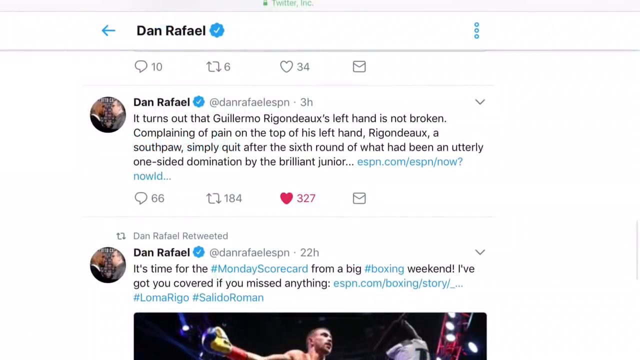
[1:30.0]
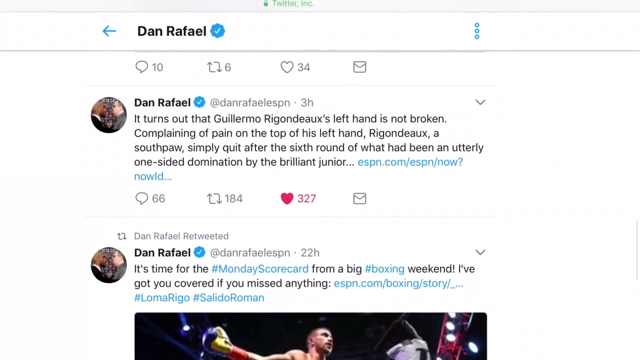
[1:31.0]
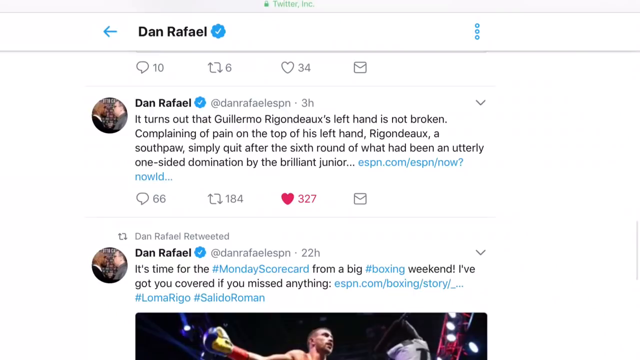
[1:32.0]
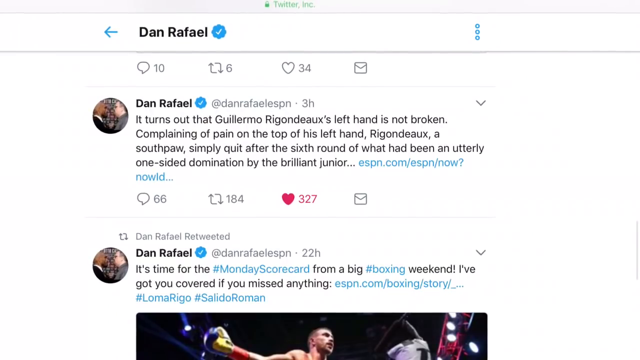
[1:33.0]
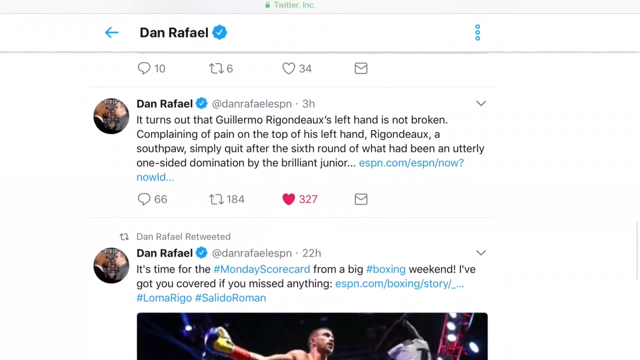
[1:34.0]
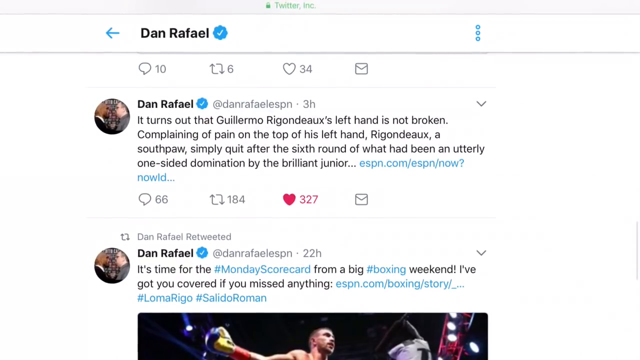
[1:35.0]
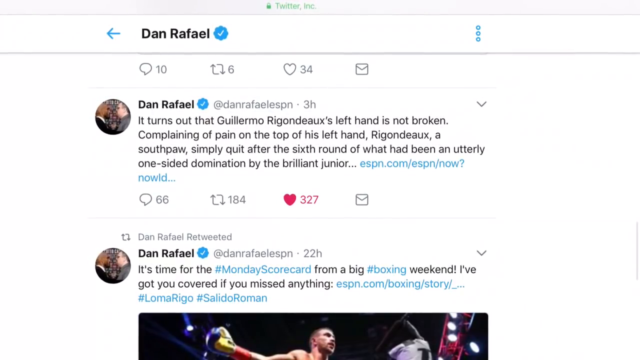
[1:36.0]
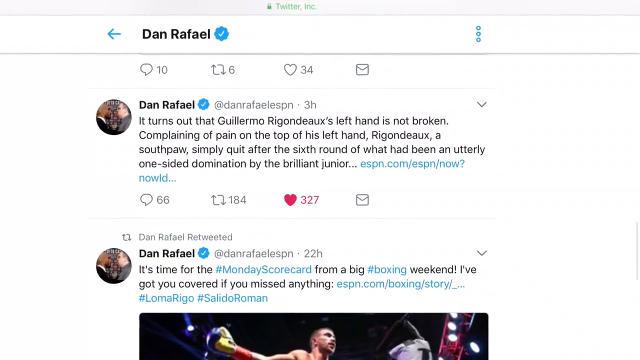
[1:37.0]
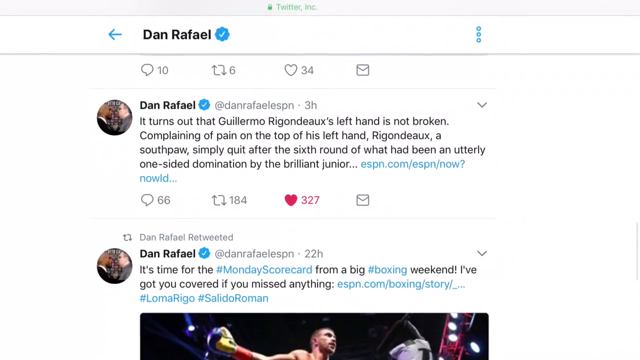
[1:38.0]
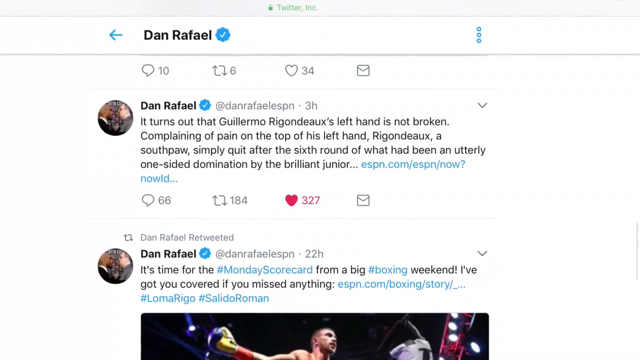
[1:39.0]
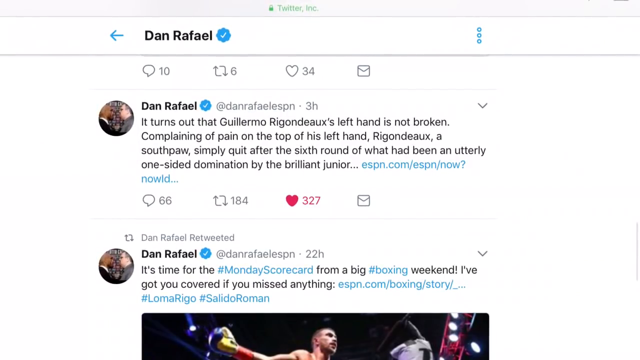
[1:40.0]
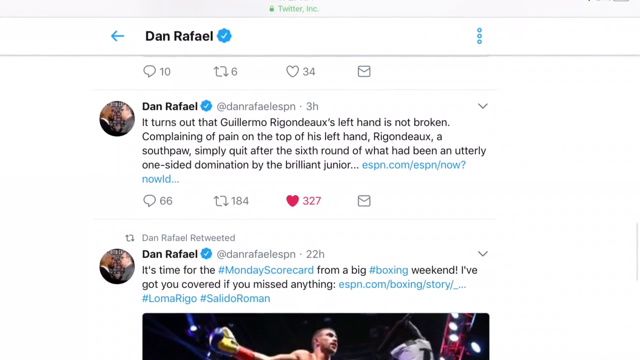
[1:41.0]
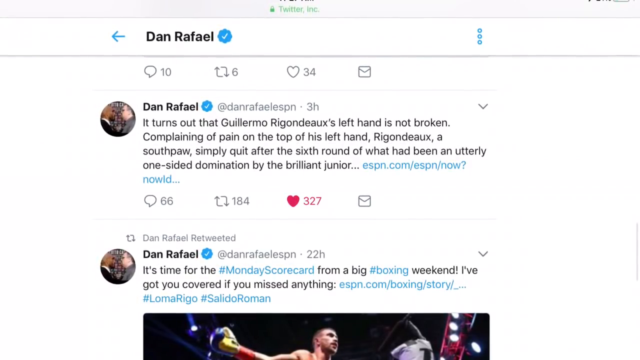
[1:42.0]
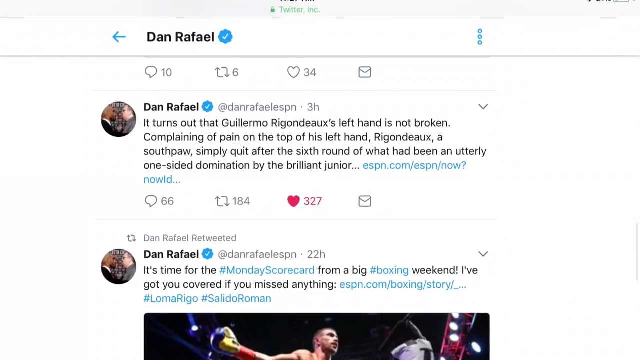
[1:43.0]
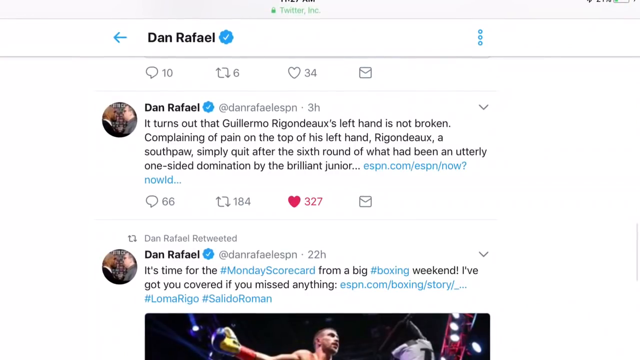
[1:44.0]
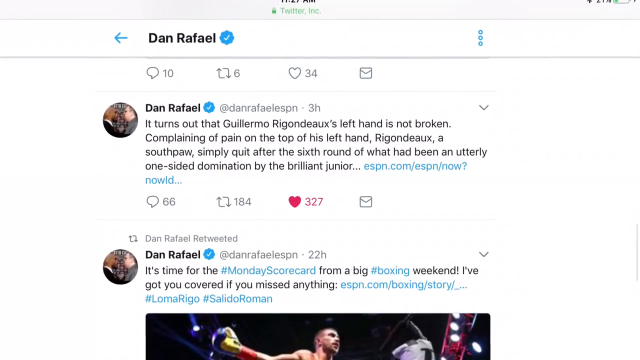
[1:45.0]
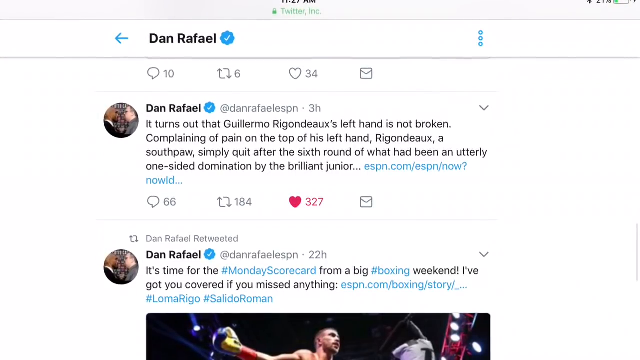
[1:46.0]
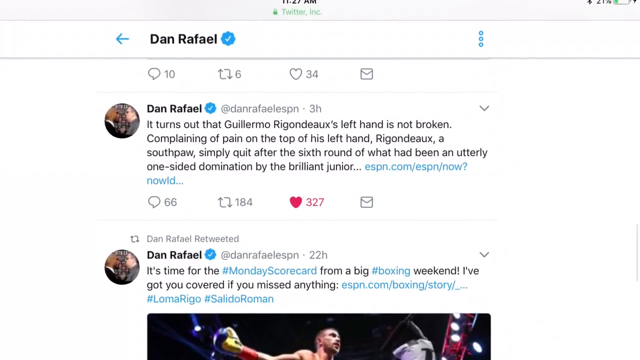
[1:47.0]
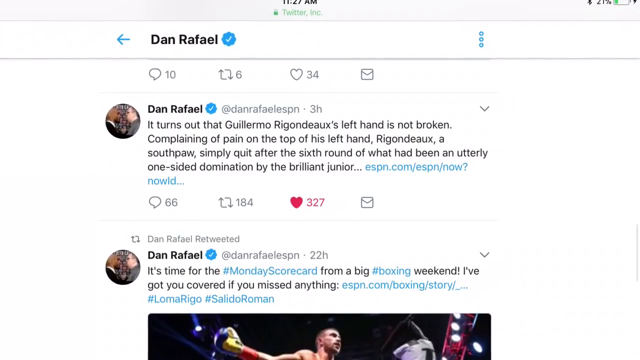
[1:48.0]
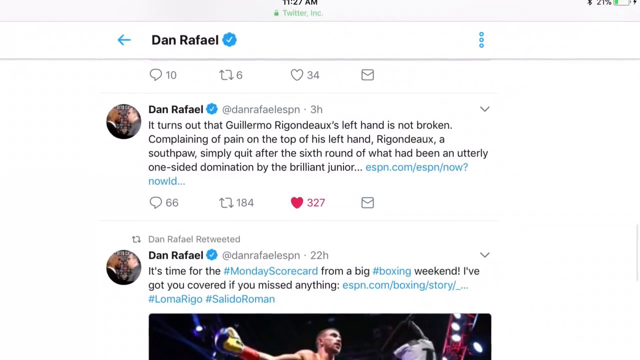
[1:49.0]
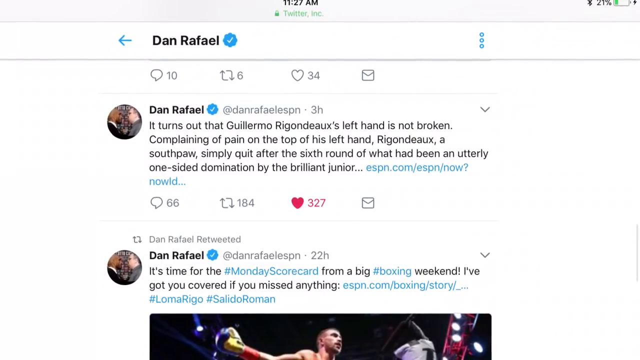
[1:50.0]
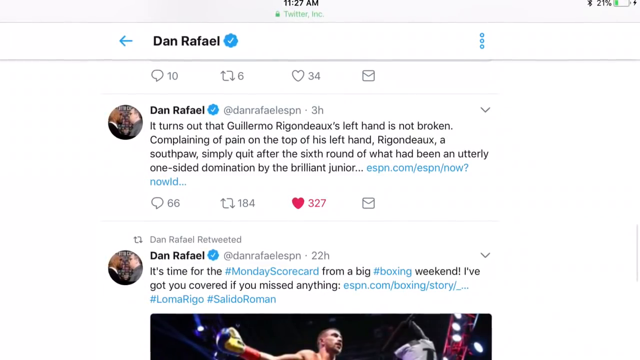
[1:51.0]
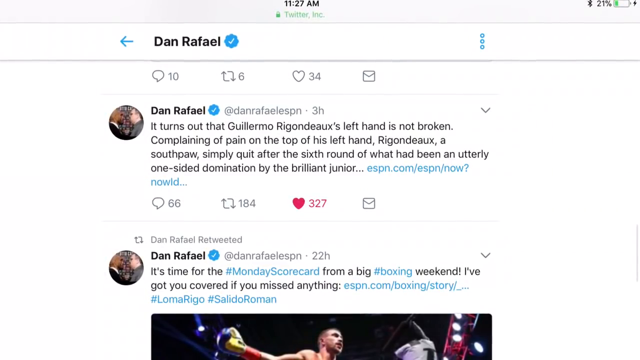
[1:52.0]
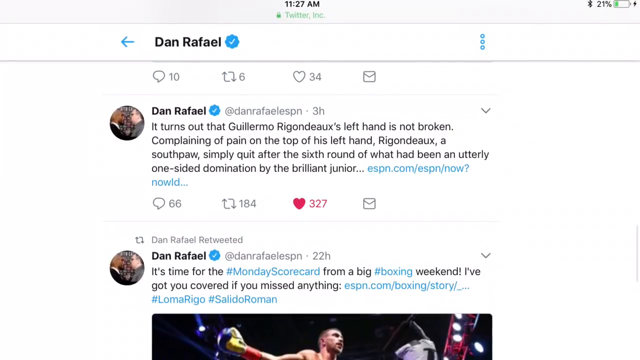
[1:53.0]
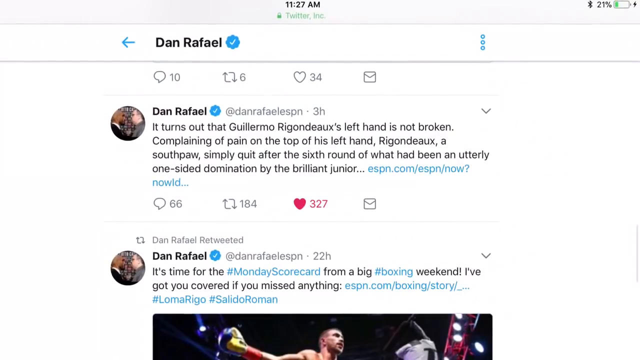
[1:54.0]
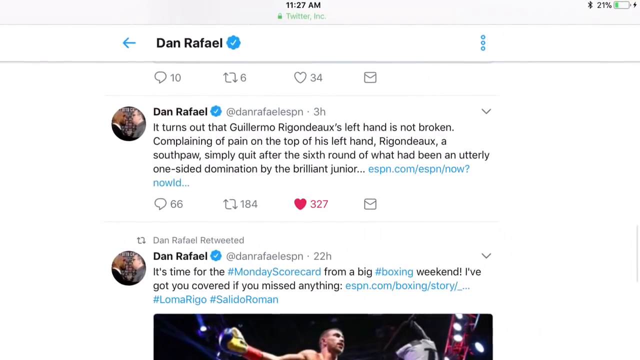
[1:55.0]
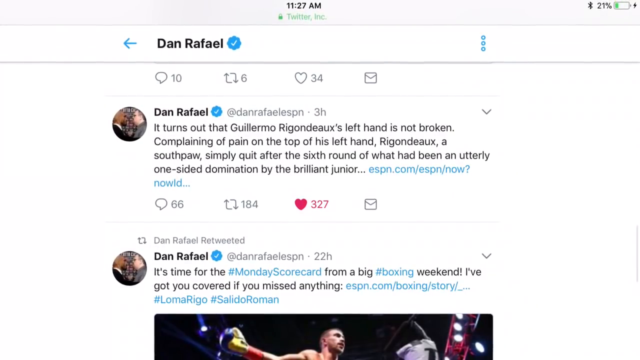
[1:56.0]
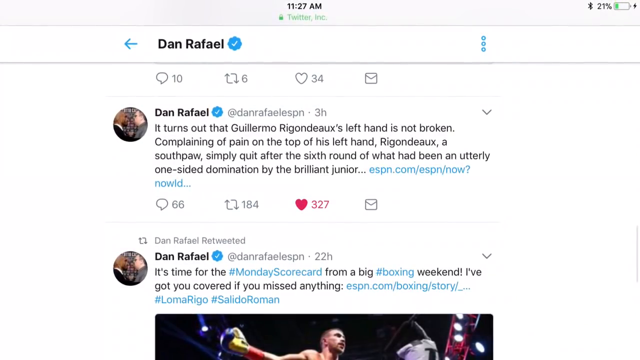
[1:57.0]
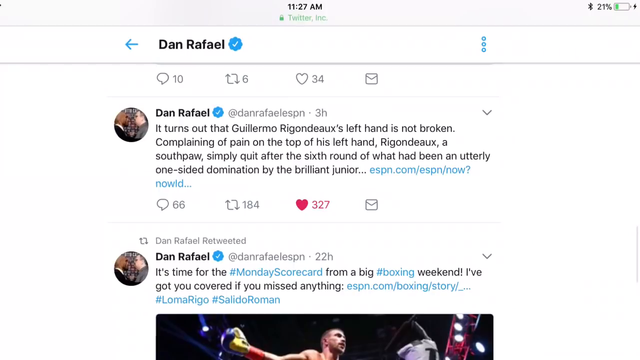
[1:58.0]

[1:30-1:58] The Twitter page stays on screen. At the top right are three small blue dots, perhaps for a settings page. The video stops on the earlier tweet by Dan Raphael that says "it turns out that Guillermo Rigondoux's left hand is not broken," which has 66 comments, 184 retweets and 327 hearts. Dan Raphael's profile picture shows two people face to face, in what appears to be a boxing weigh-in. It is unclear who they are: the man on the left is black, with a white shirt and a black shirt top, and the man on the right is white, with gray hair, perhaps glasses, and a gray shirt. The page remains on screen for the final few seconds. The device's battery at the top right shows 21% remaining, and the middle of the screen shows the time as 11.27 a.m.